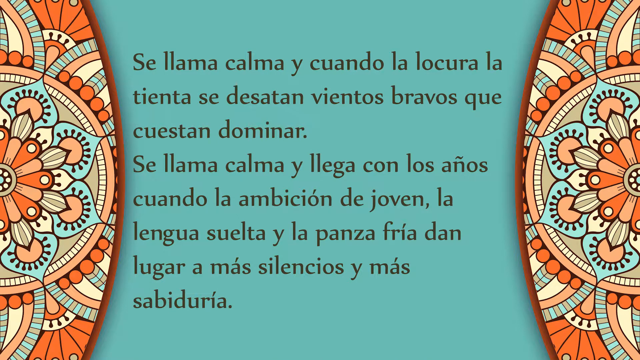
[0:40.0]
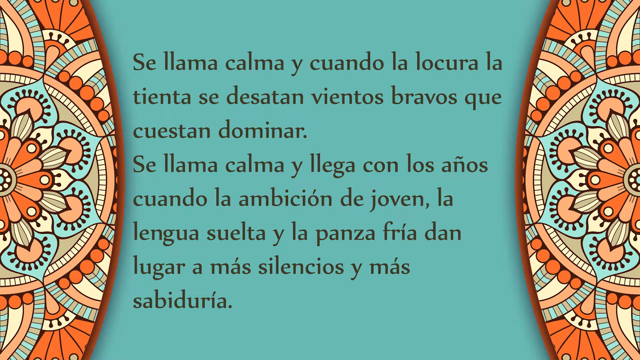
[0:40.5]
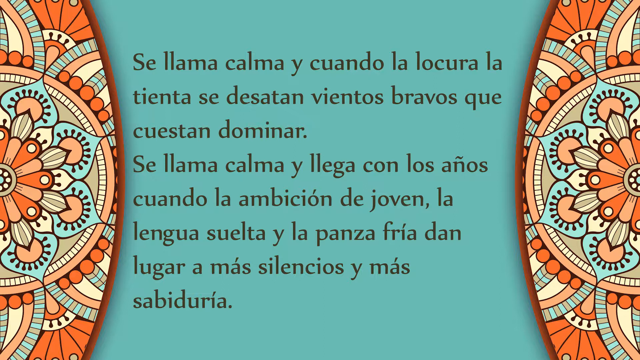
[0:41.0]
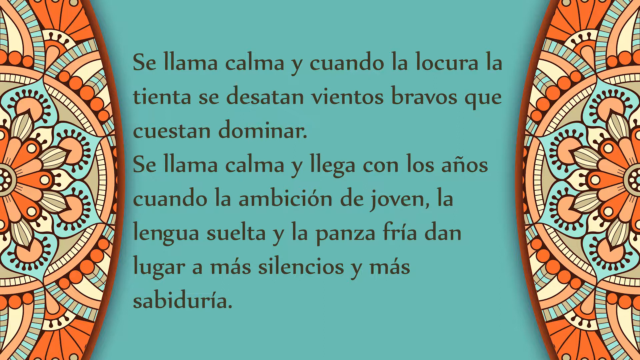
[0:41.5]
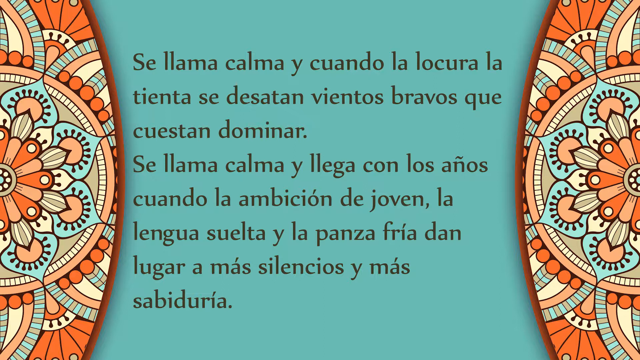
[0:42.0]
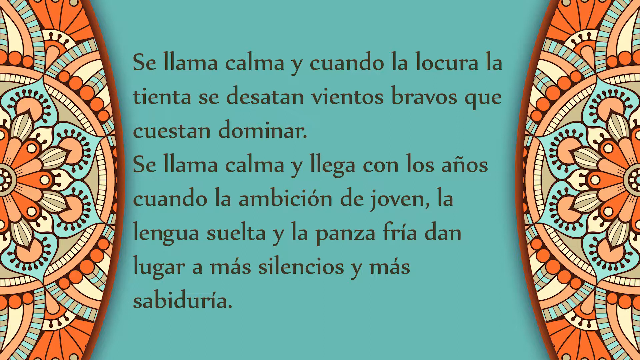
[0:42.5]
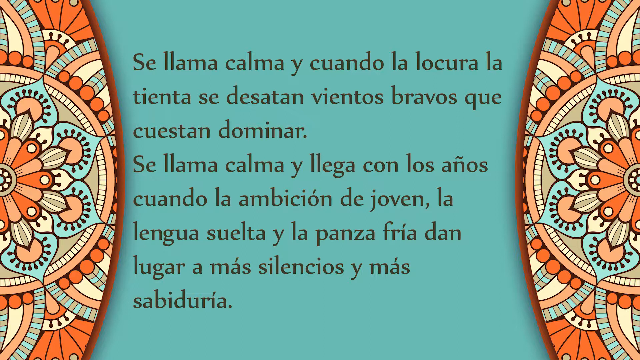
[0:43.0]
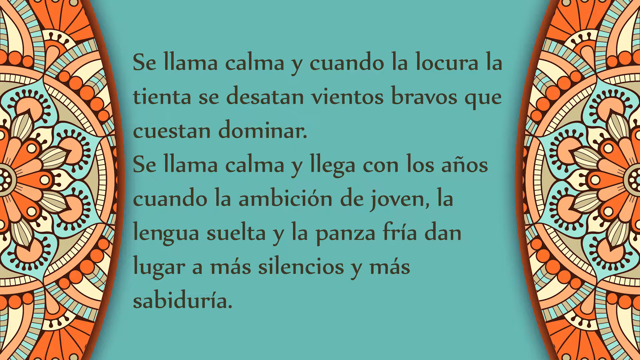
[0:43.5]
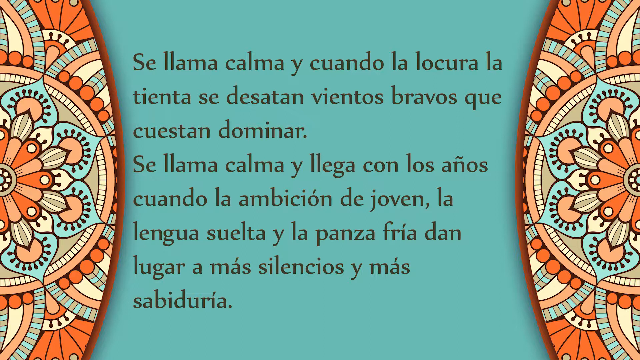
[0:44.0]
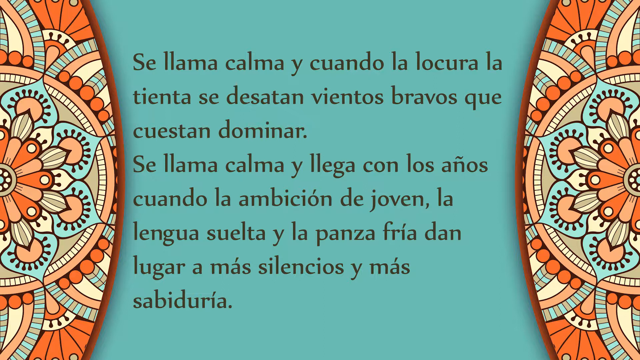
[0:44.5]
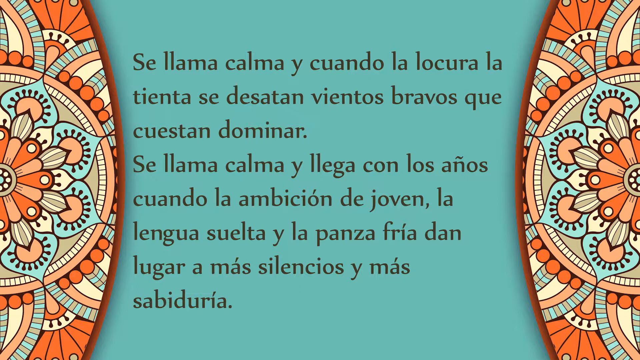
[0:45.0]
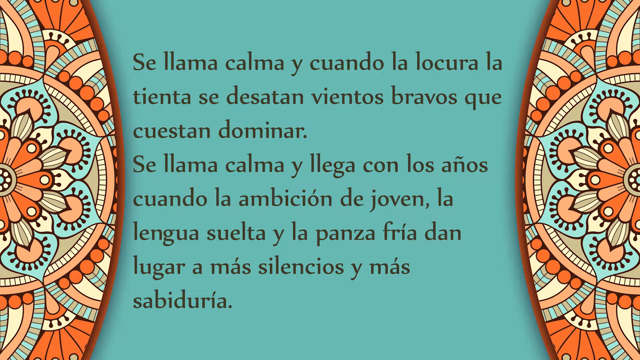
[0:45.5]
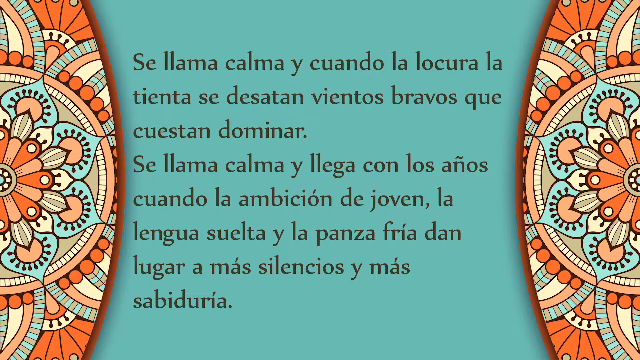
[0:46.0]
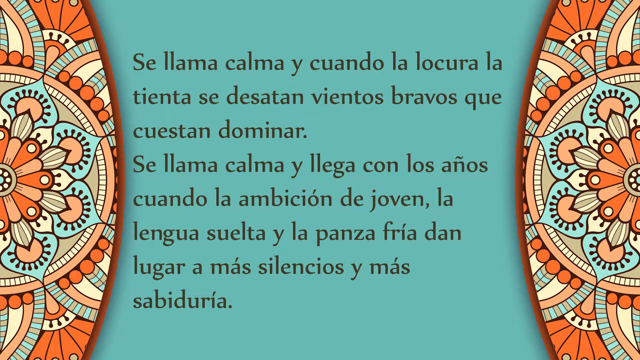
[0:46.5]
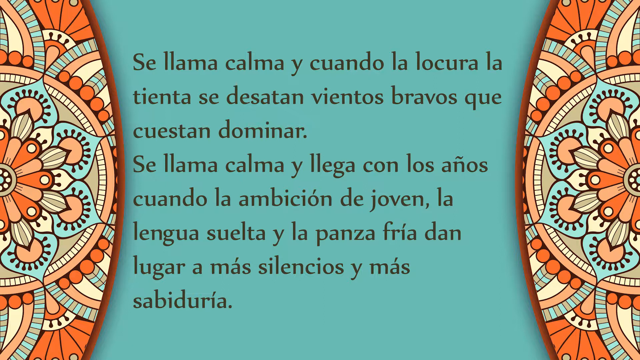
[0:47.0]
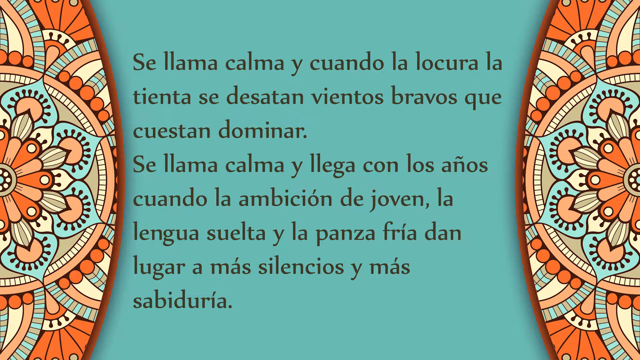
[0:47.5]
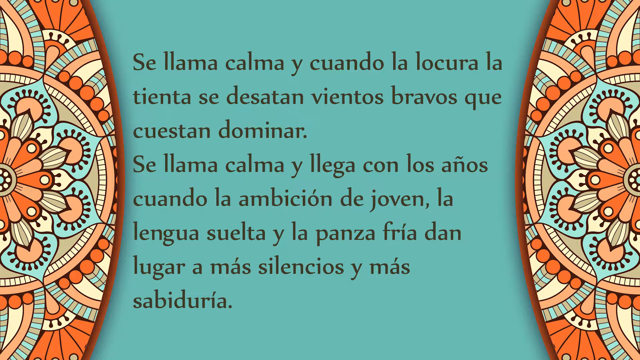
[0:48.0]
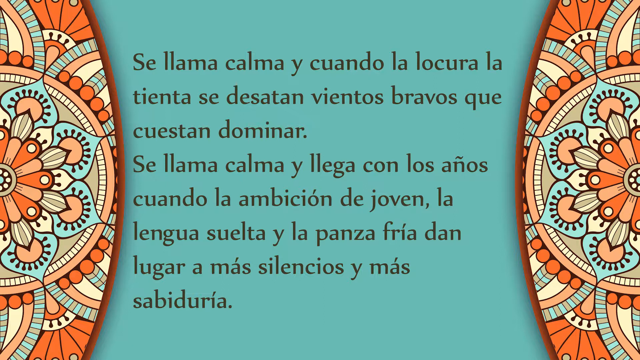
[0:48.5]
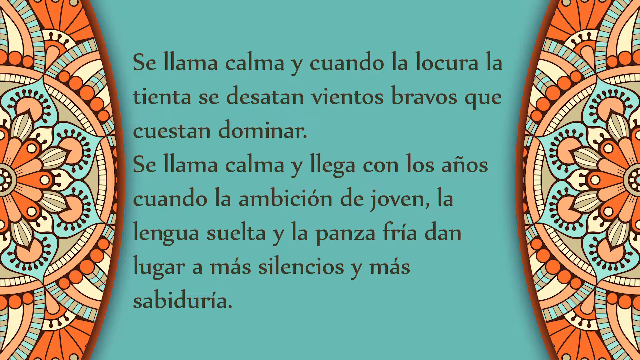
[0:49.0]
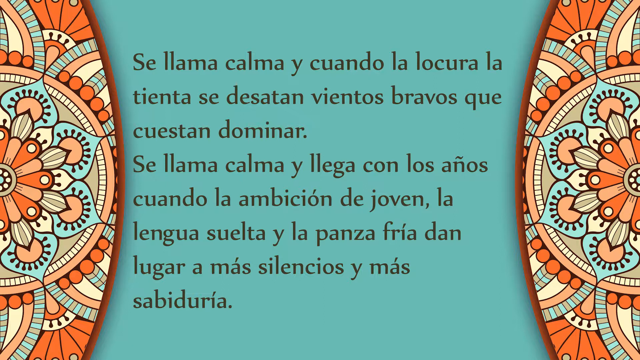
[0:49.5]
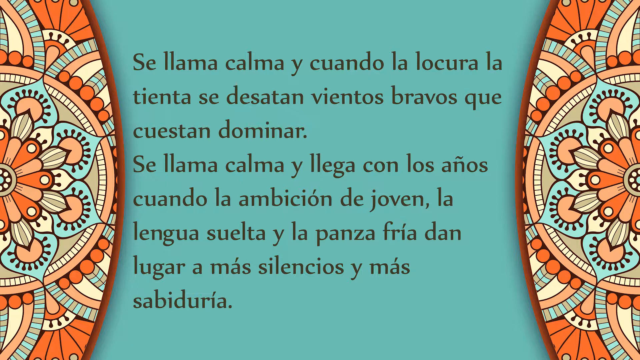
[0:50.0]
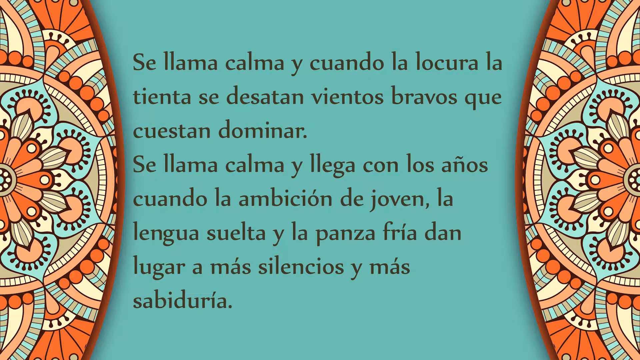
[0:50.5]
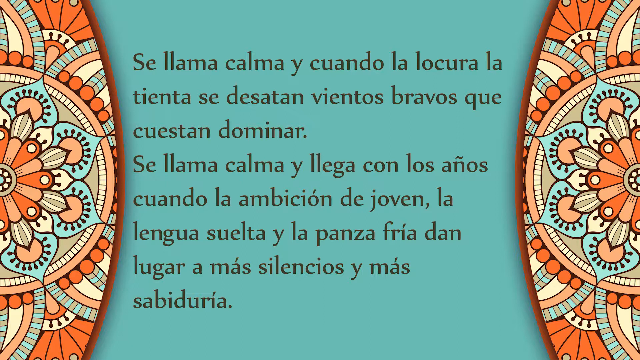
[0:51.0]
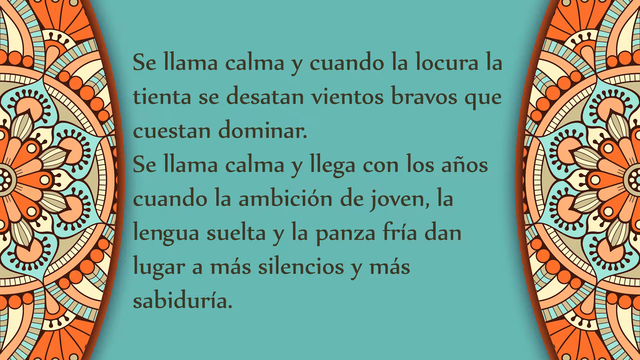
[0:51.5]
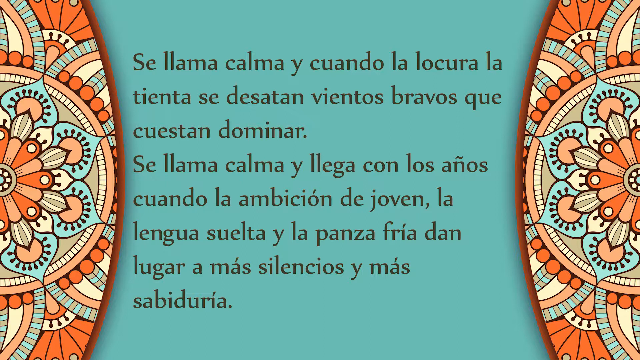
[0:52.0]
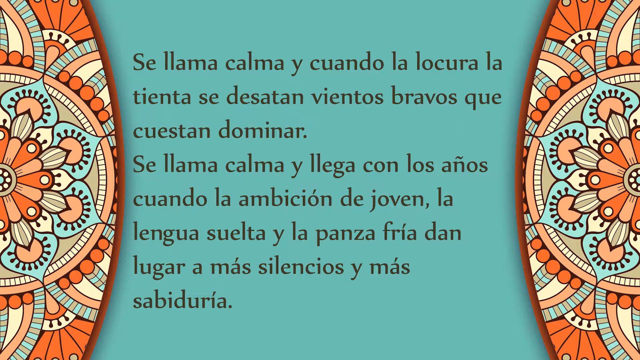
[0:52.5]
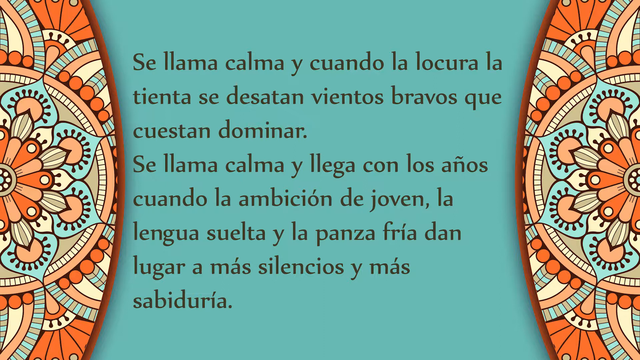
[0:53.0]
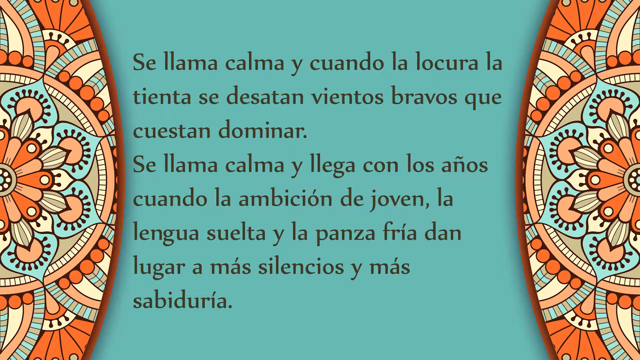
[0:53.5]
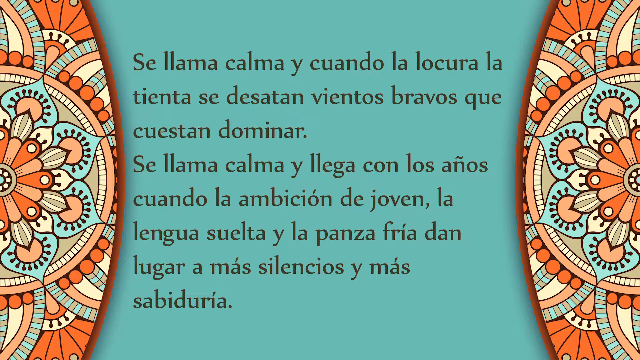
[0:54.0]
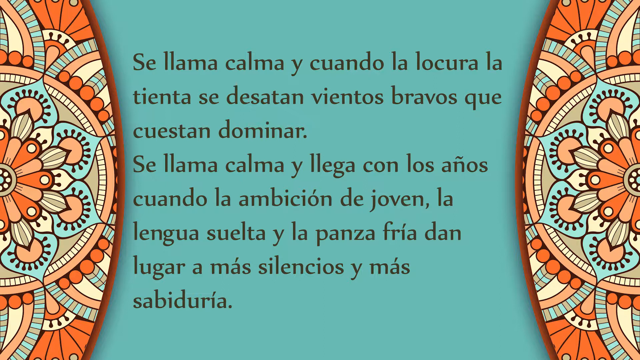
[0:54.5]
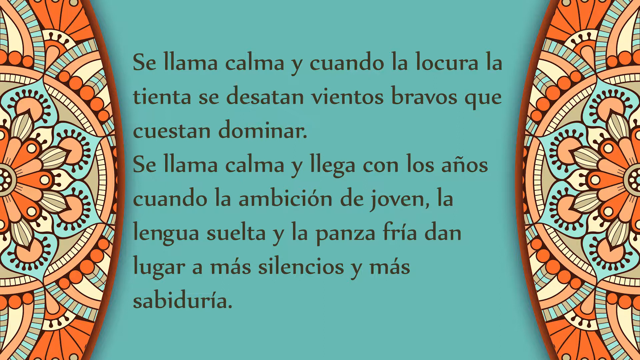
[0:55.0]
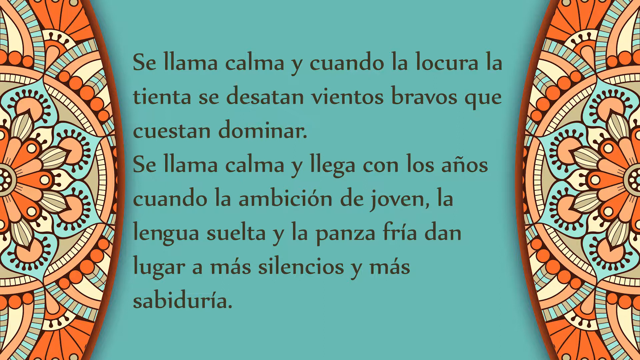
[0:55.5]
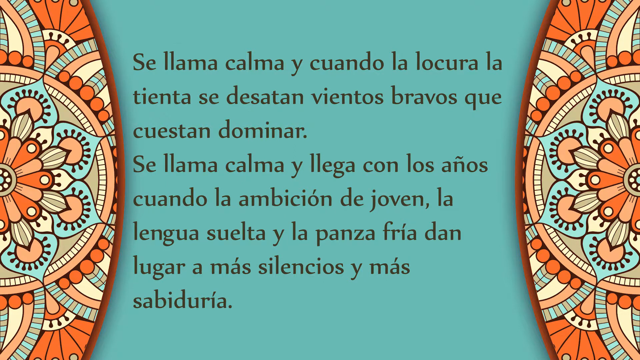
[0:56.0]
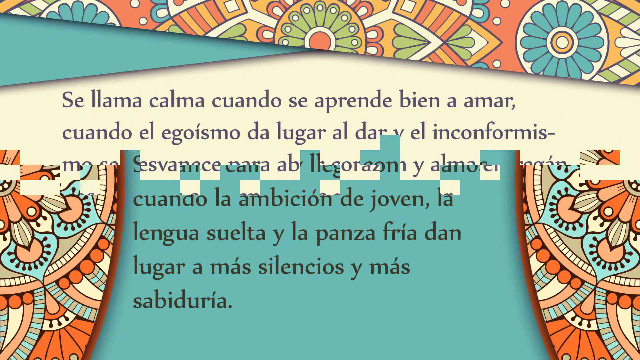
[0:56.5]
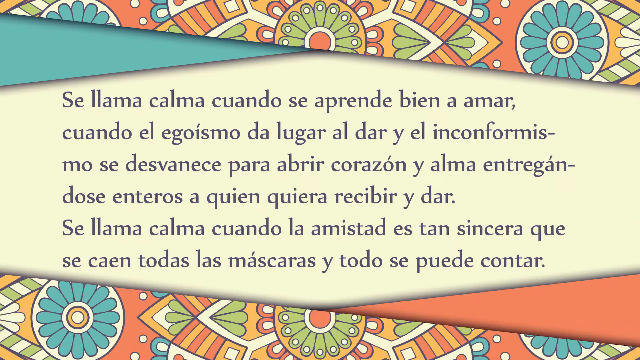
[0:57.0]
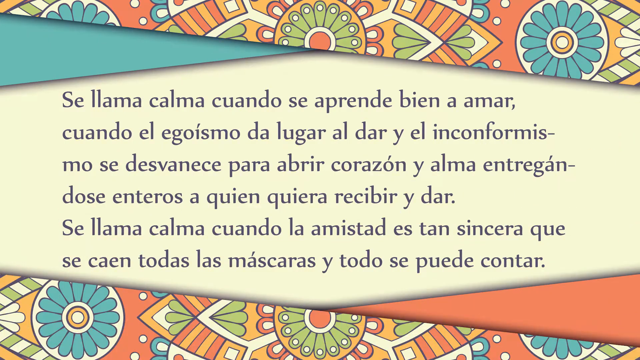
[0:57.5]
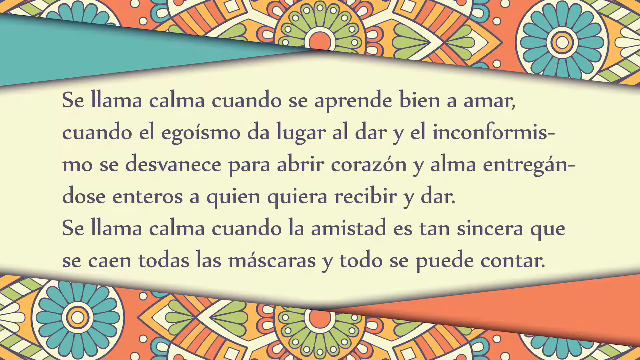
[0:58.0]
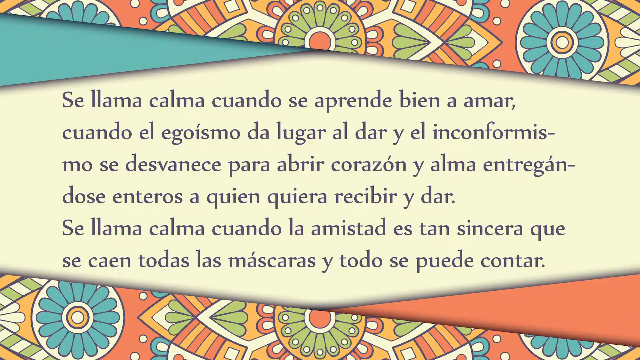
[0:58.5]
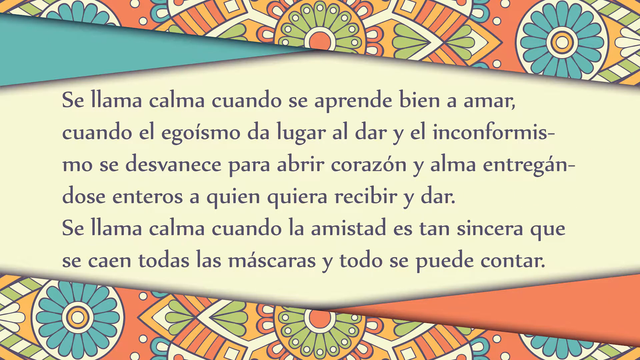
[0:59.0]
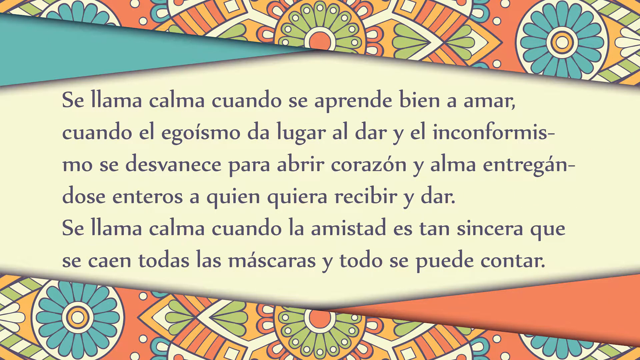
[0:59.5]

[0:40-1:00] The text over turquoise stays on screen for a good while, then a dissolve pattern transition occurs. The new text is a little wider across the screen, the center is yellow, and the patterns are at the top and bottom. The sentences again start with the same three words. The top and bottom designs are similar but opposite mirrors: each has a colored center circle with a pinwheel pattern, petals around it over a circle, and another layer, and what is on one side seems to appear reversed on the other. The top pattern is at a slight angle, shorter at the top left and longer on the right, with a small triangular section of blue sticking out just below it. The bottom pattern is taller at the left corner and shorter toward the right corner, with a triangular section of red coming out instead of blue. The center area is almost like a prism, a little taller and coming to a point.